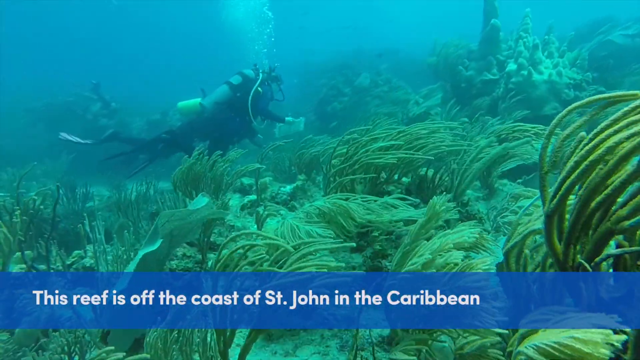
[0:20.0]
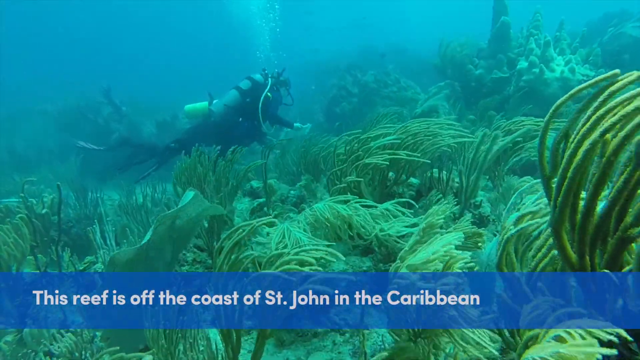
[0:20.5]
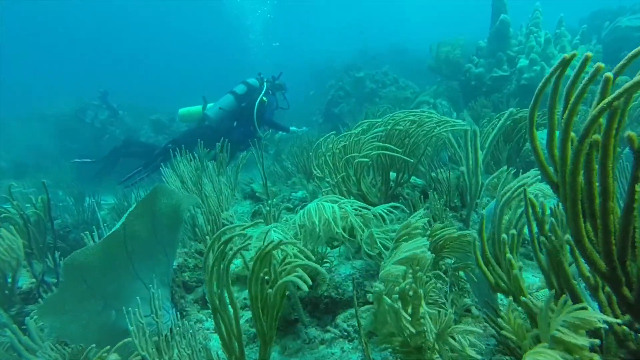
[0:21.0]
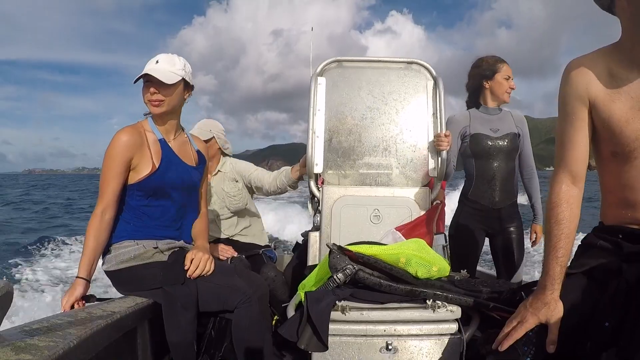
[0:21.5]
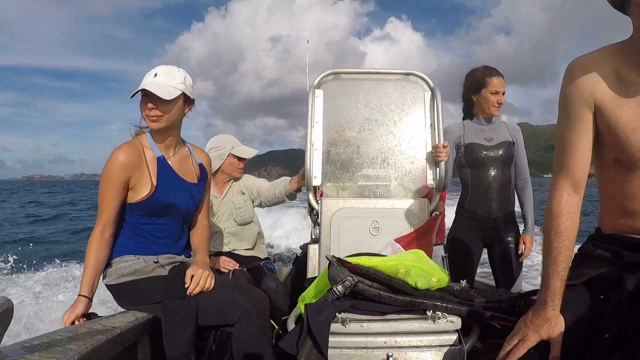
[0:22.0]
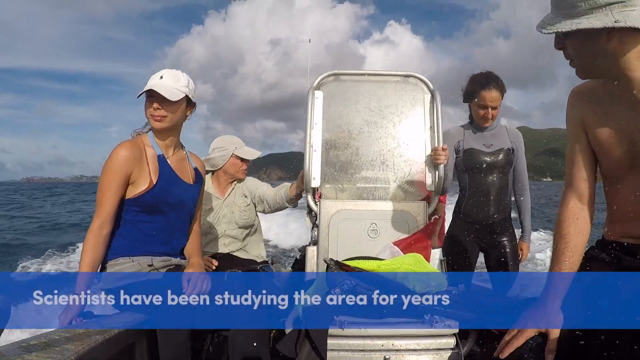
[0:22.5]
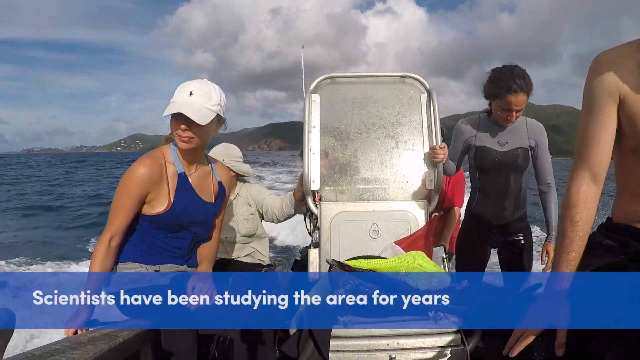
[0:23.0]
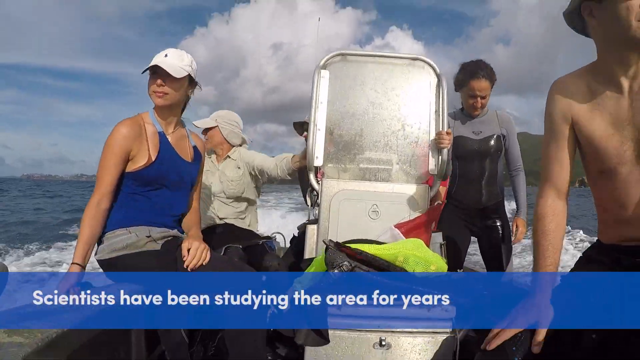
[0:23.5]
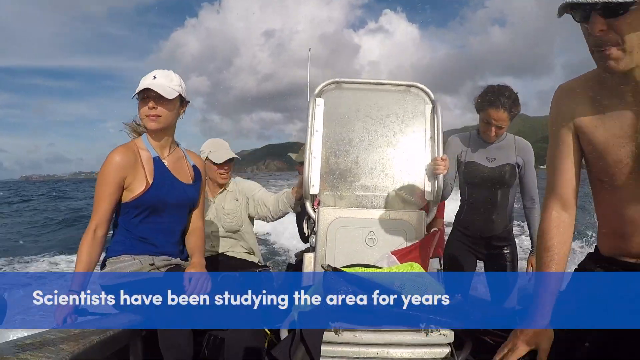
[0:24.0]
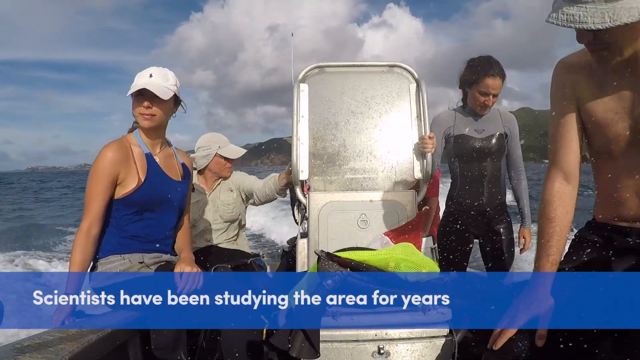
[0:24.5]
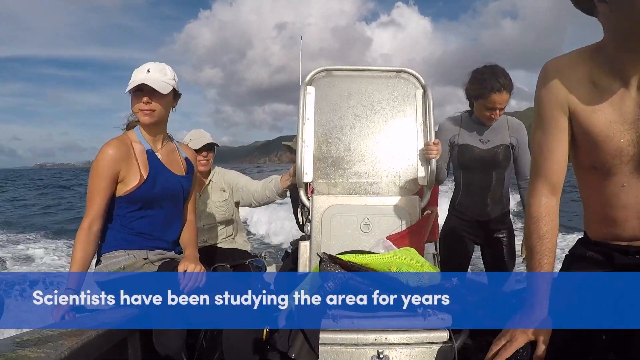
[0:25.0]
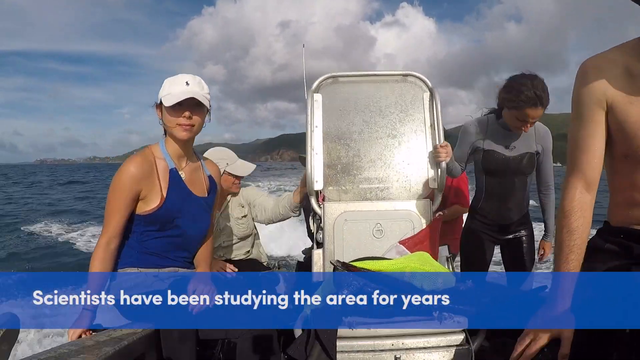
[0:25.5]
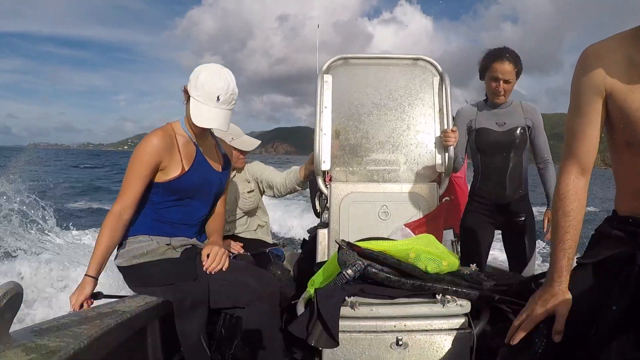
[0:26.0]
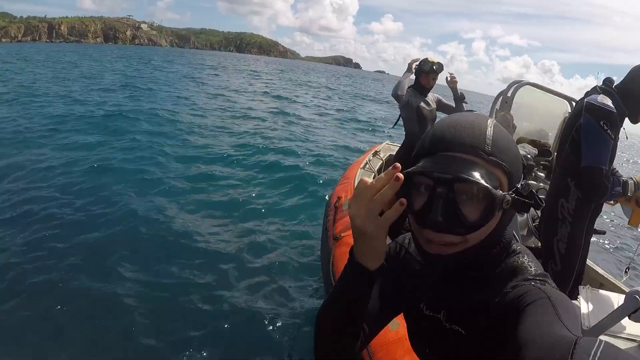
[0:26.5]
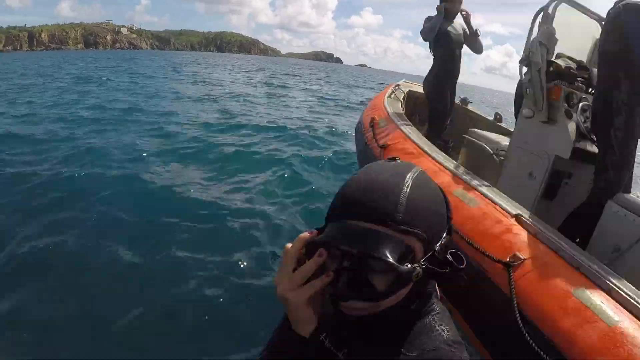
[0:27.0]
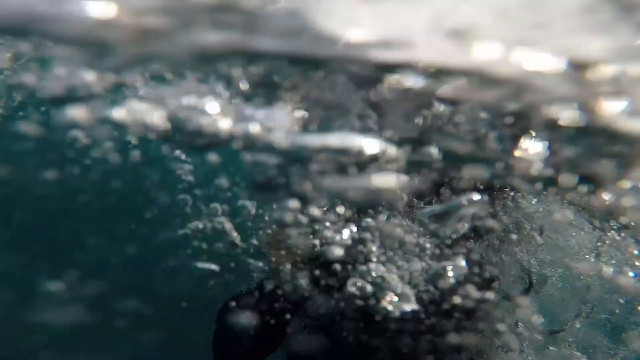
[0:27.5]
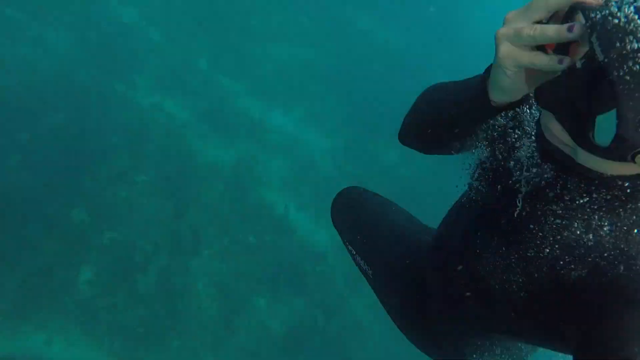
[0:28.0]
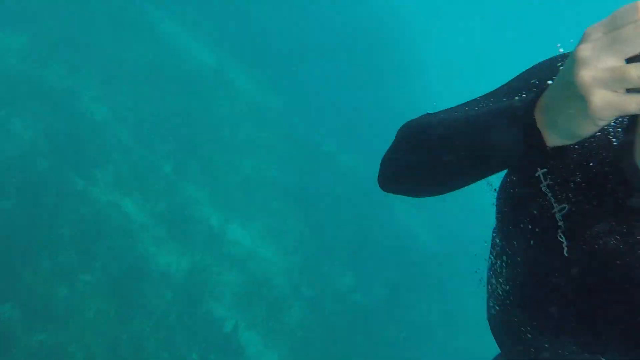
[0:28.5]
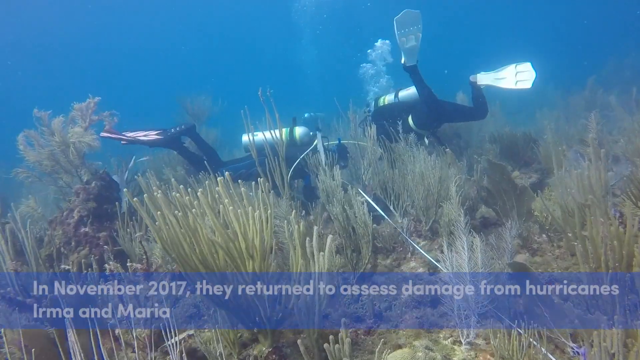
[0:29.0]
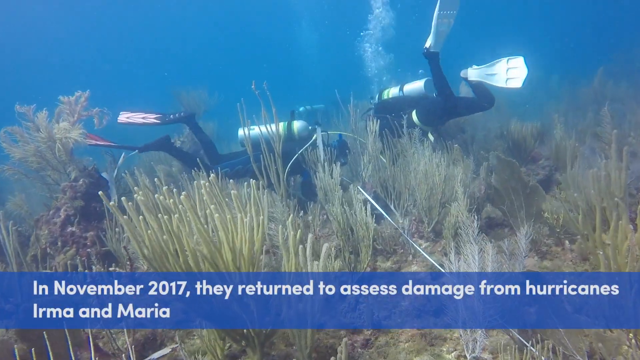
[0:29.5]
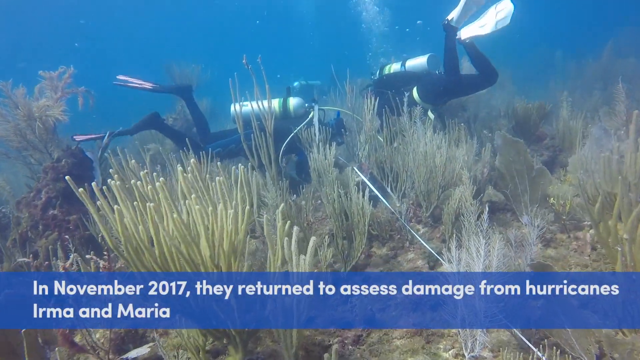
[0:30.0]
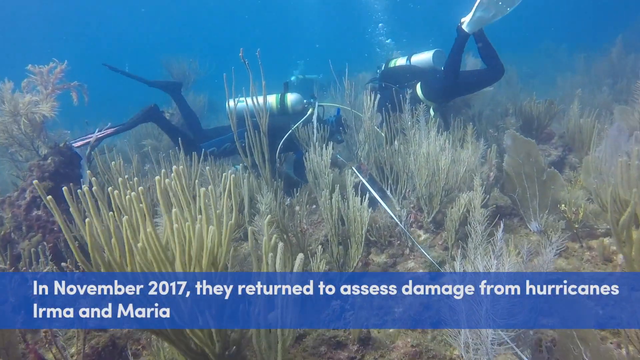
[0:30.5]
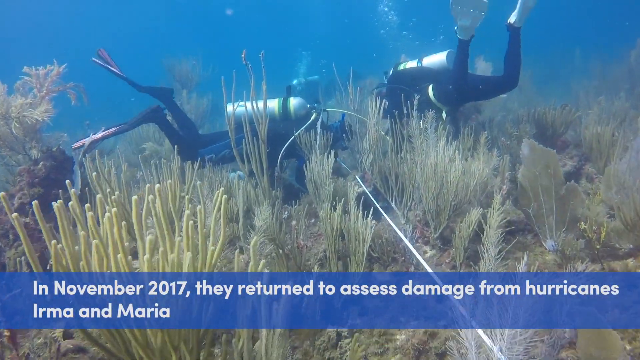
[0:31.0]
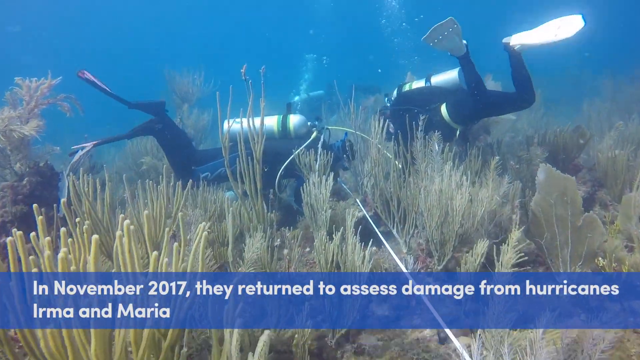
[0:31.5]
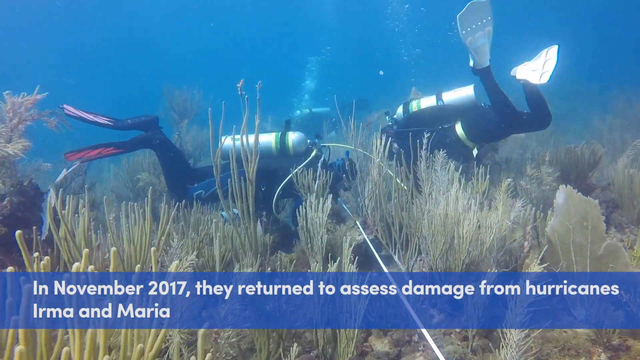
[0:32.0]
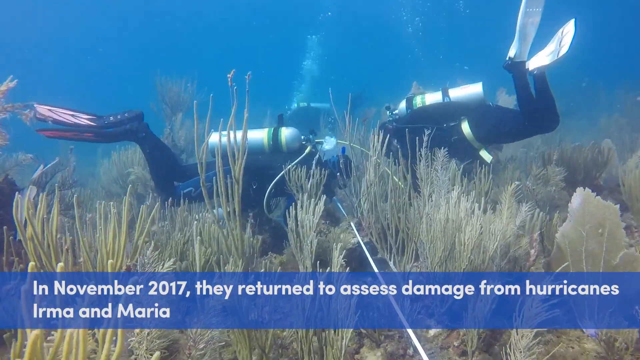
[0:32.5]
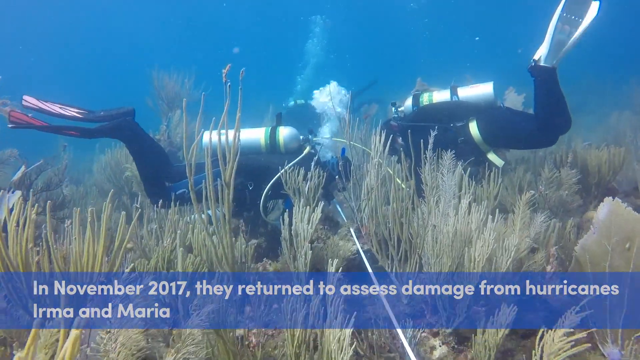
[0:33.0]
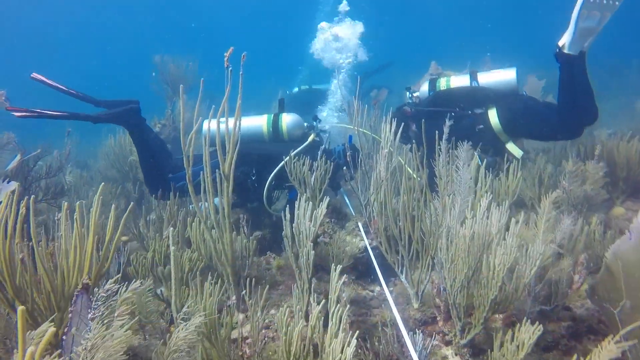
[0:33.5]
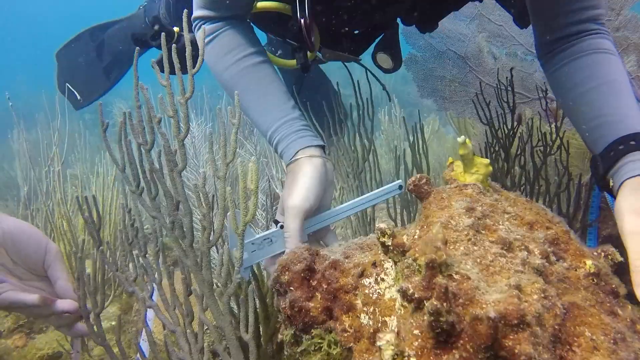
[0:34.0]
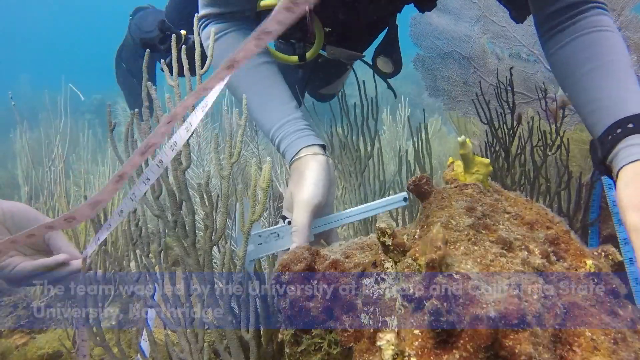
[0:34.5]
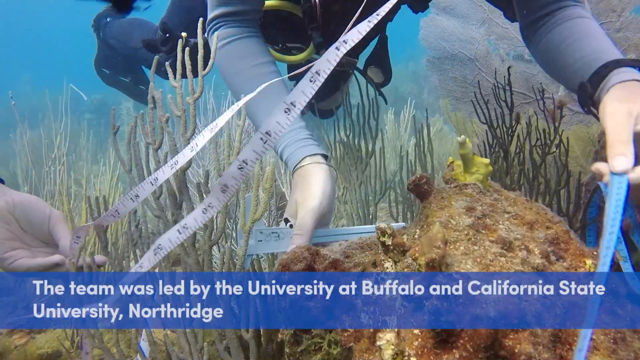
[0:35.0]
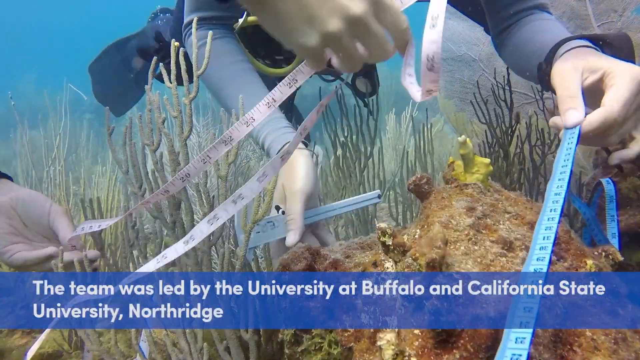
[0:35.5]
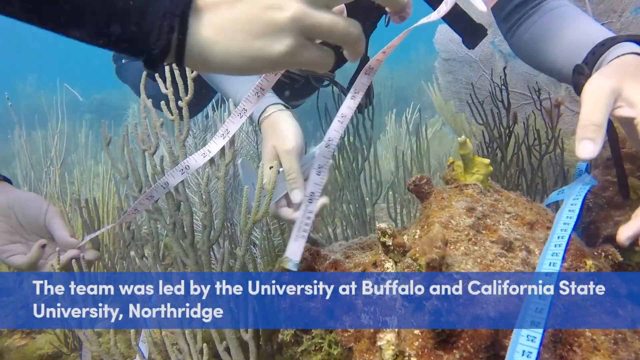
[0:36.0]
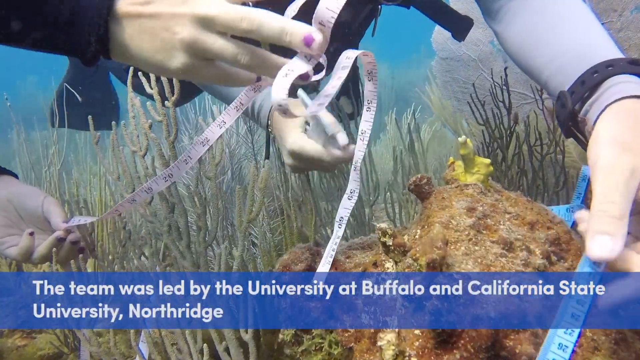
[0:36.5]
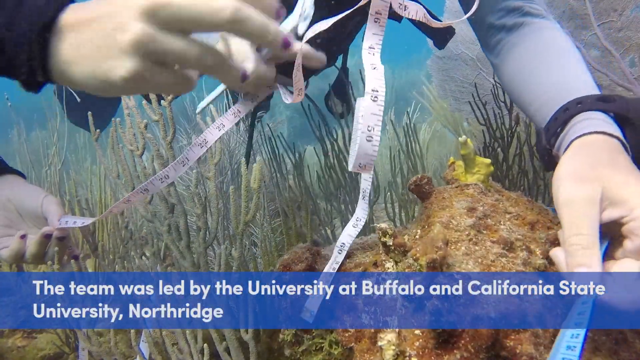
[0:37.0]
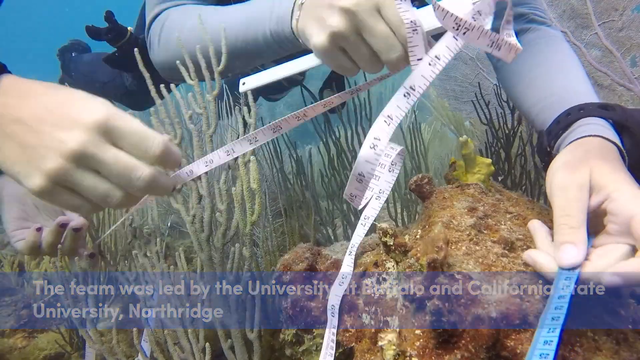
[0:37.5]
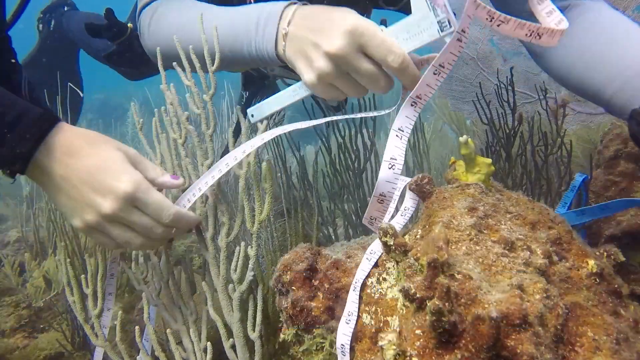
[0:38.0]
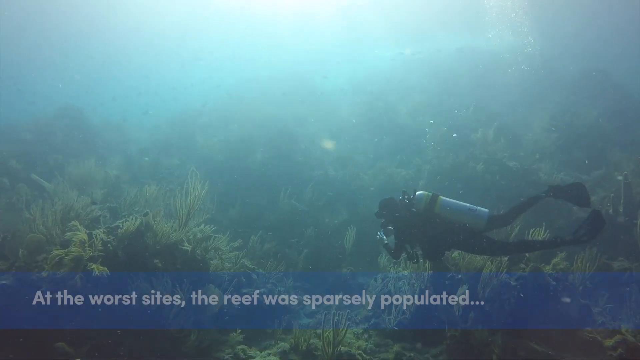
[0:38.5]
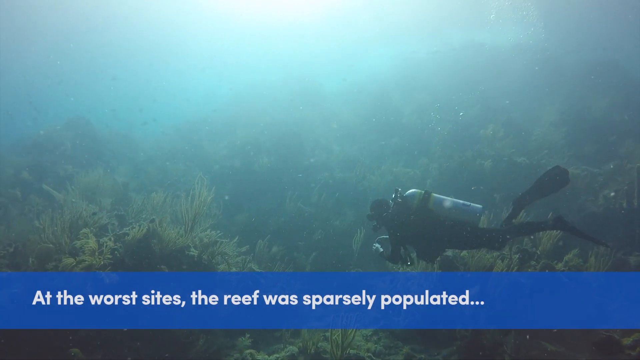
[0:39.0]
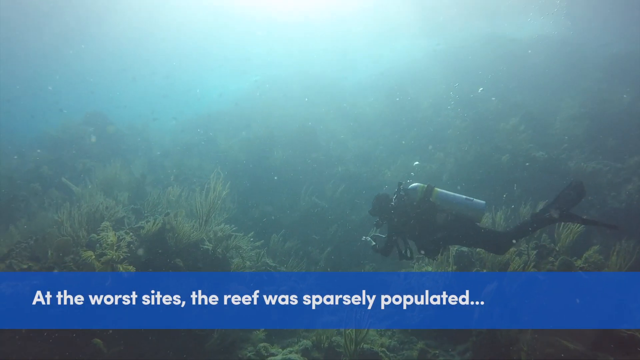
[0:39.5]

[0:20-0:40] A blue rectangle with white text reads "this reef is on the coast of St. John's in Caribbean". A picture shows four people on a boat heading somewhere, with text reading "scientists have been studying this area for years". The swimmers wear suits in gray and blue; there is a topless man and a white shirt. A diver dives into the water from an orange boat. Text reads "in November 2017 they returned to assess damage from hurricanes Irma and Maria", followed by "the team was led by university at Buffalo and California State University Northridge" and "at the worst sites the reef was sparsely populated". The team takes measurements of the reef, and a man swims in a black suit.